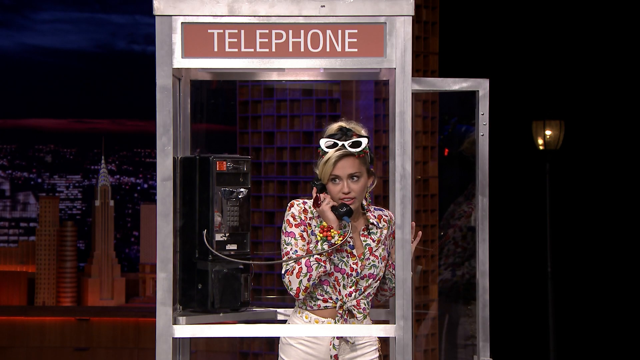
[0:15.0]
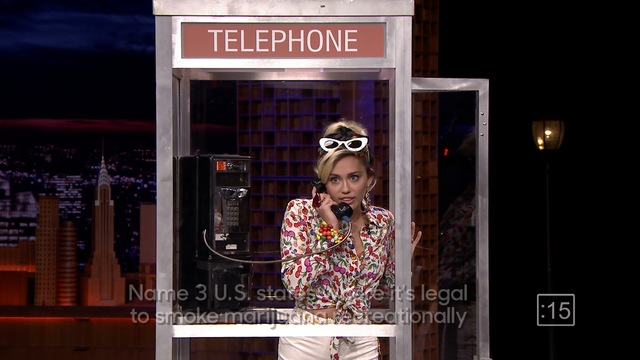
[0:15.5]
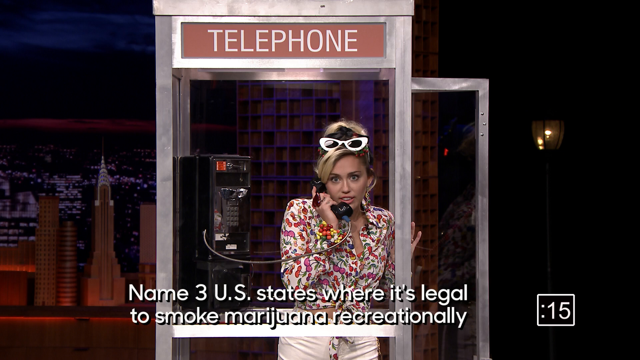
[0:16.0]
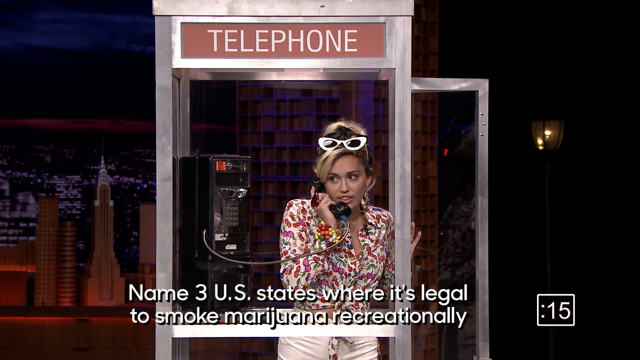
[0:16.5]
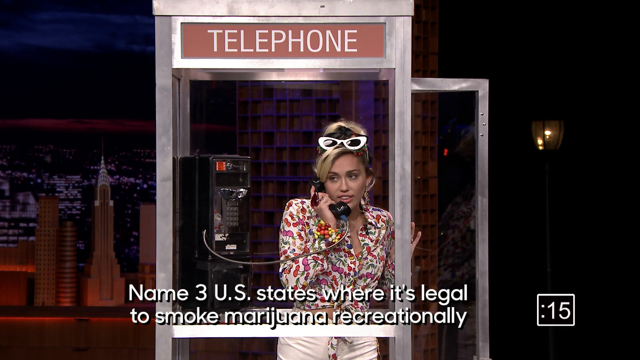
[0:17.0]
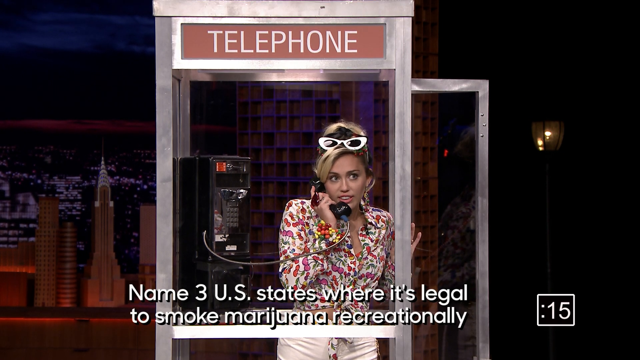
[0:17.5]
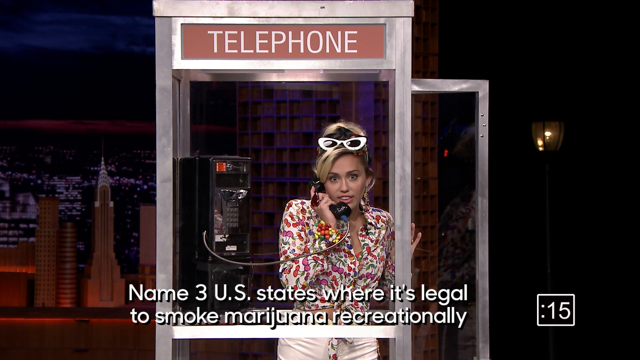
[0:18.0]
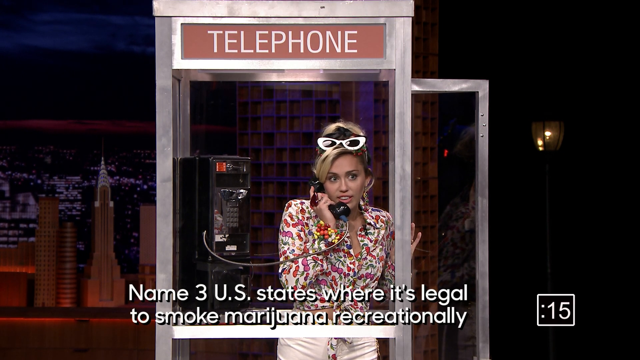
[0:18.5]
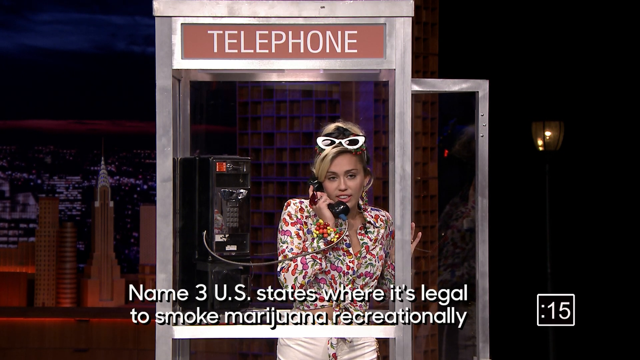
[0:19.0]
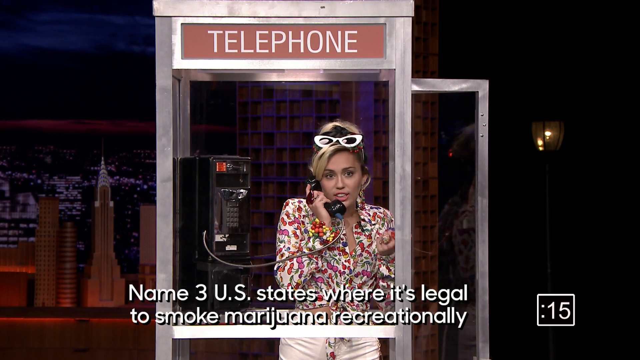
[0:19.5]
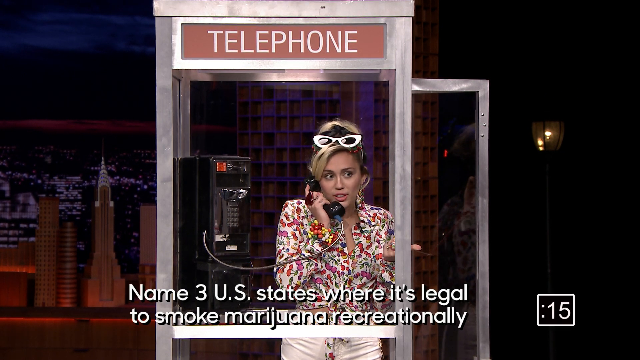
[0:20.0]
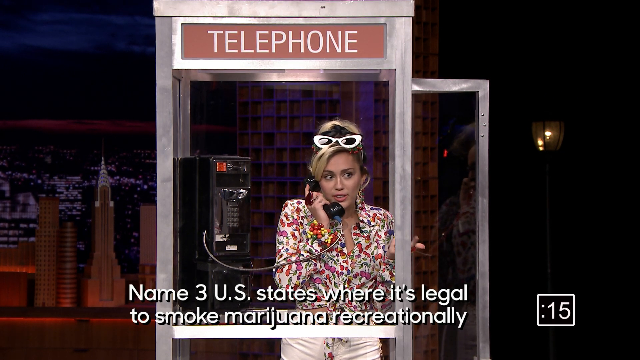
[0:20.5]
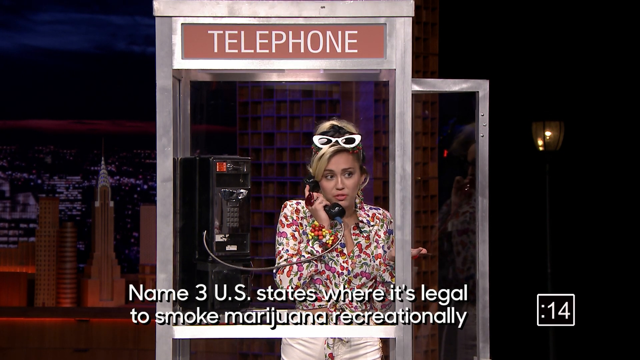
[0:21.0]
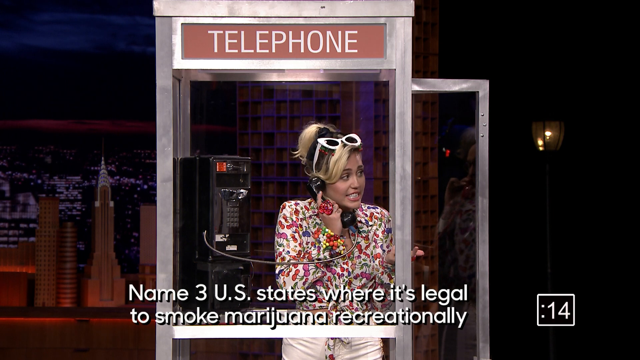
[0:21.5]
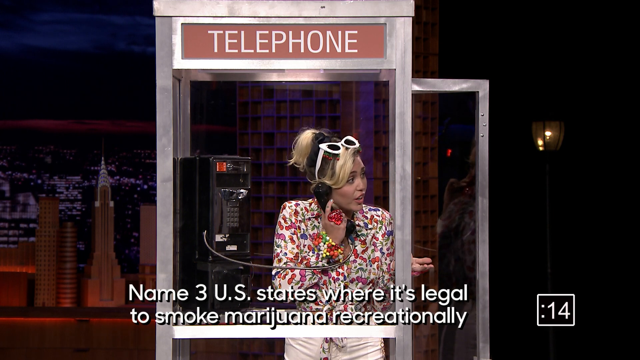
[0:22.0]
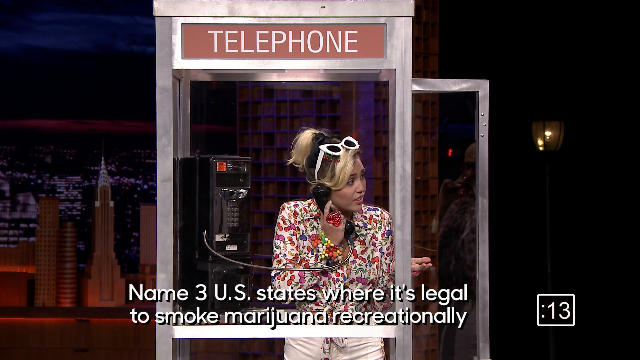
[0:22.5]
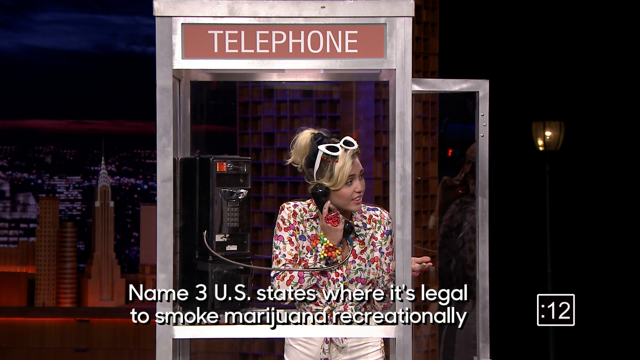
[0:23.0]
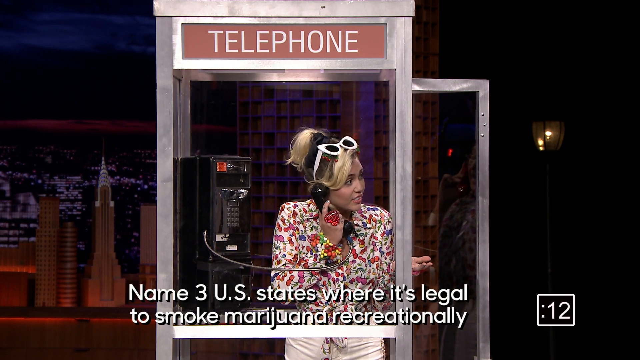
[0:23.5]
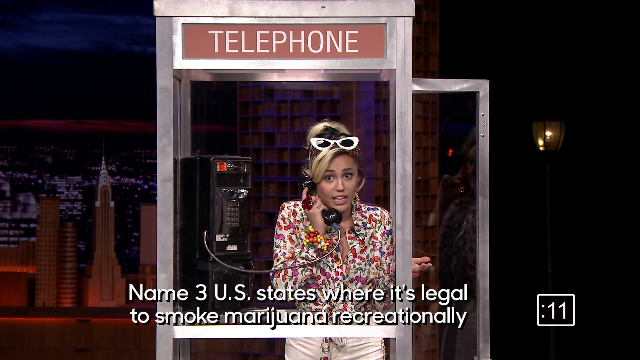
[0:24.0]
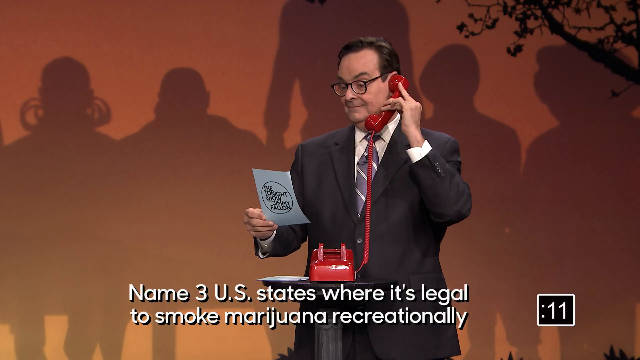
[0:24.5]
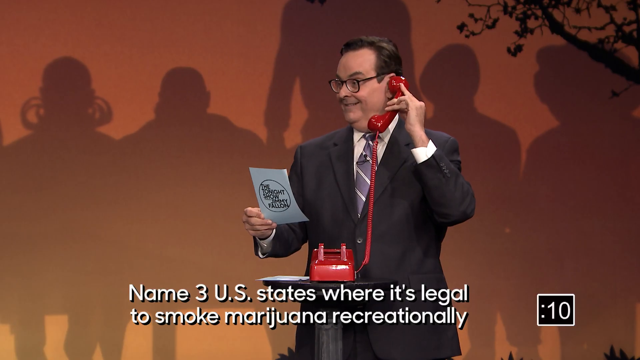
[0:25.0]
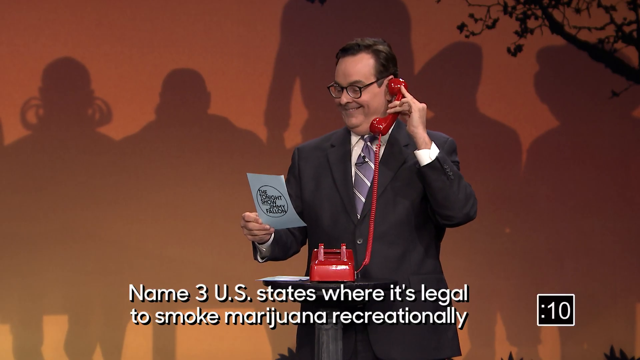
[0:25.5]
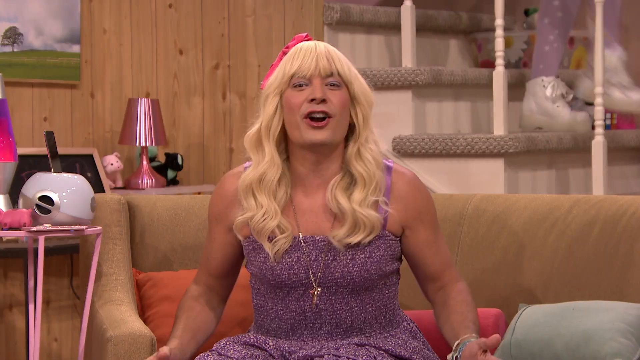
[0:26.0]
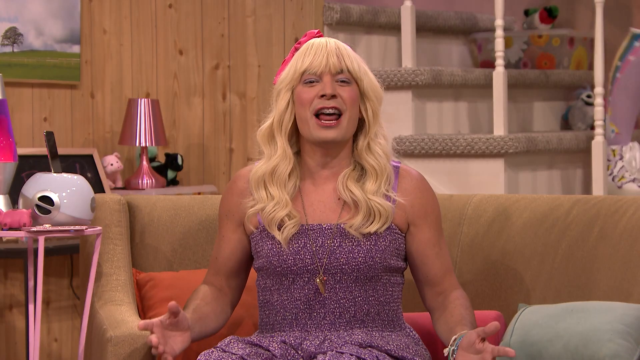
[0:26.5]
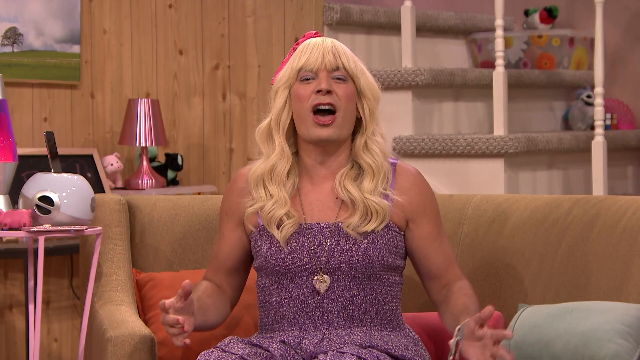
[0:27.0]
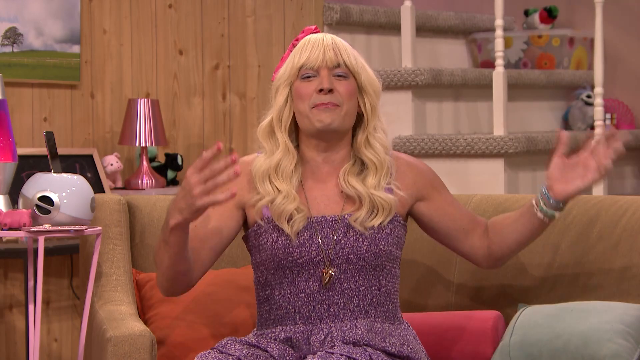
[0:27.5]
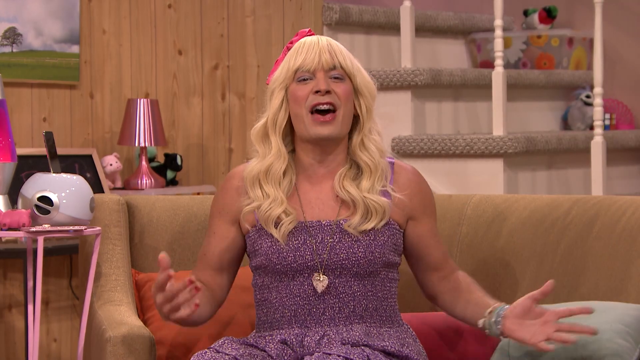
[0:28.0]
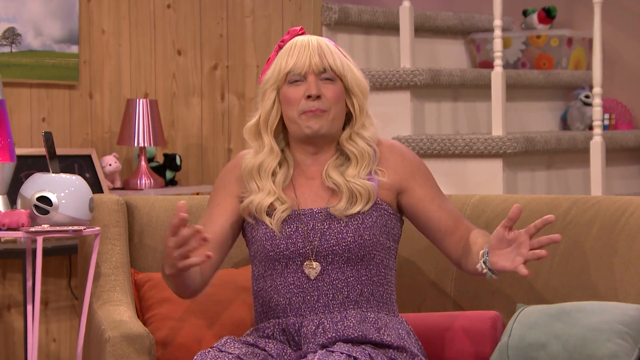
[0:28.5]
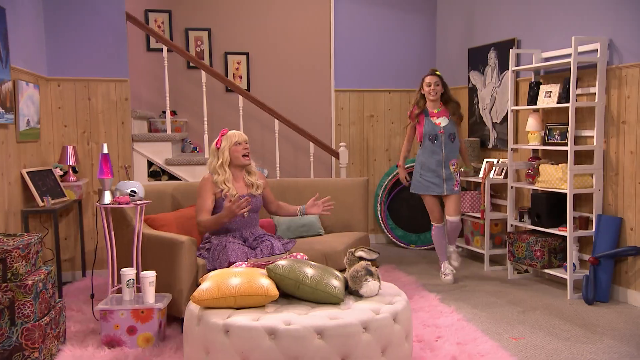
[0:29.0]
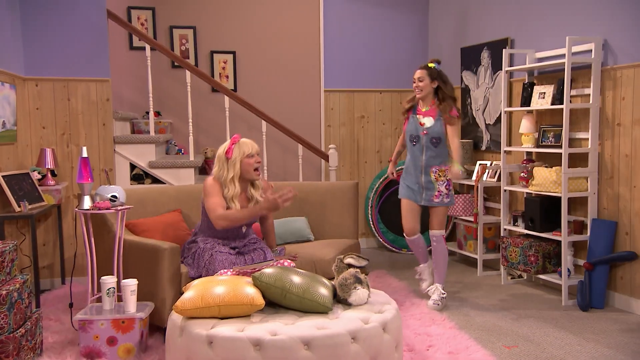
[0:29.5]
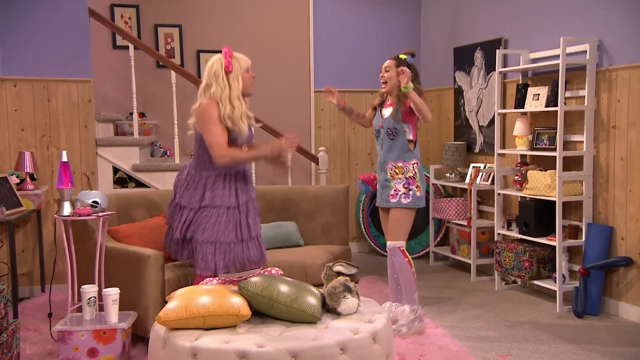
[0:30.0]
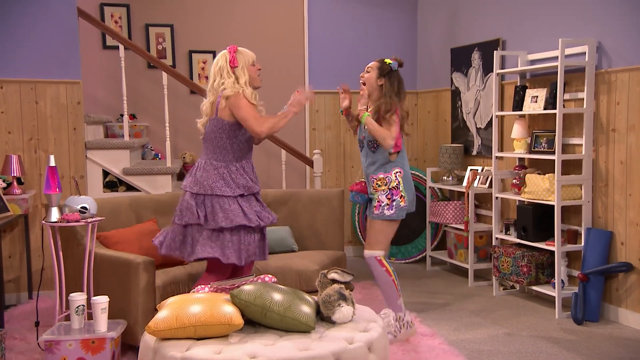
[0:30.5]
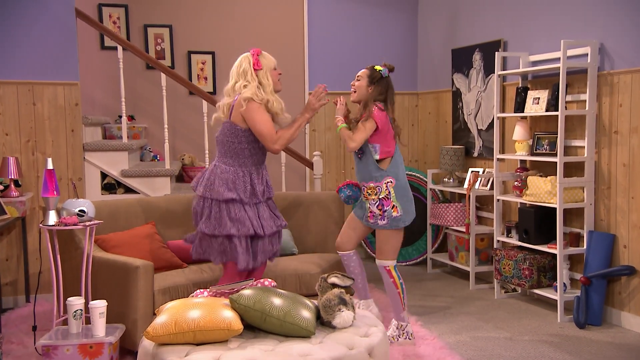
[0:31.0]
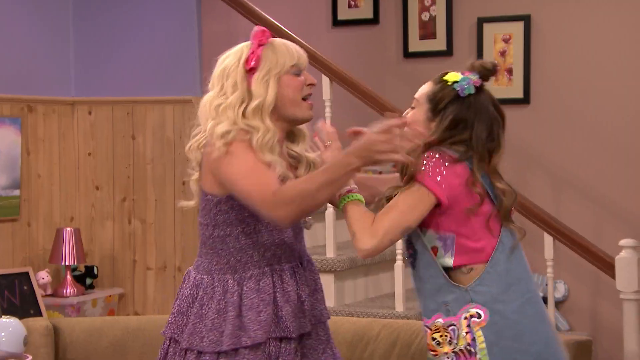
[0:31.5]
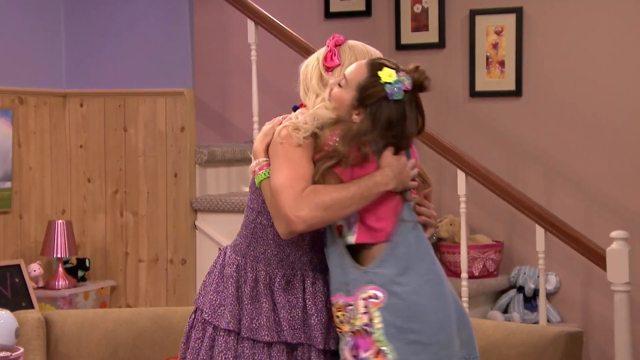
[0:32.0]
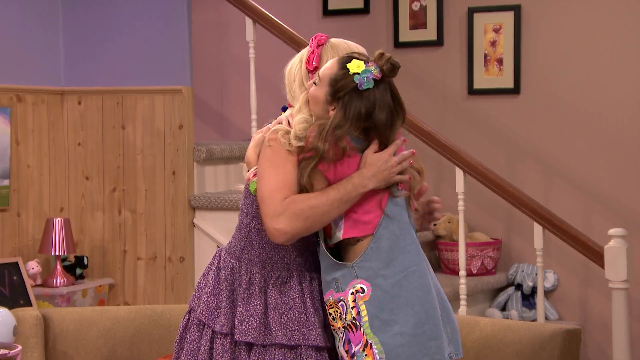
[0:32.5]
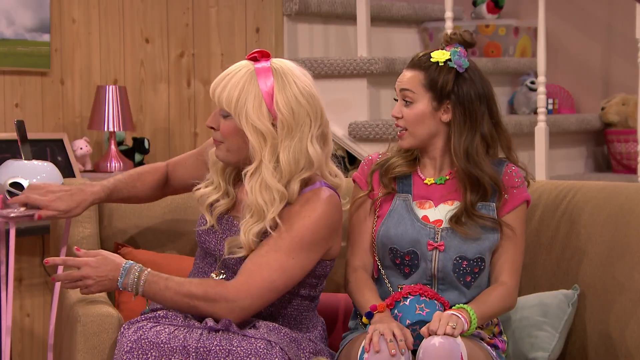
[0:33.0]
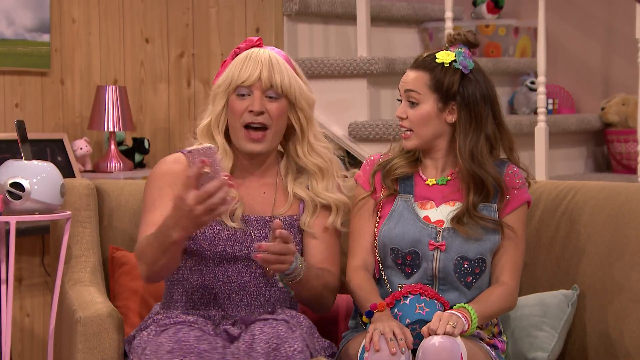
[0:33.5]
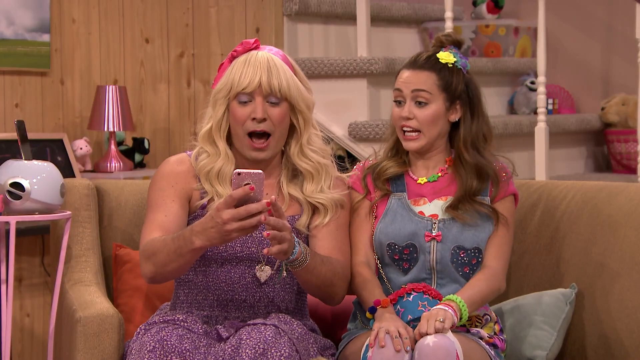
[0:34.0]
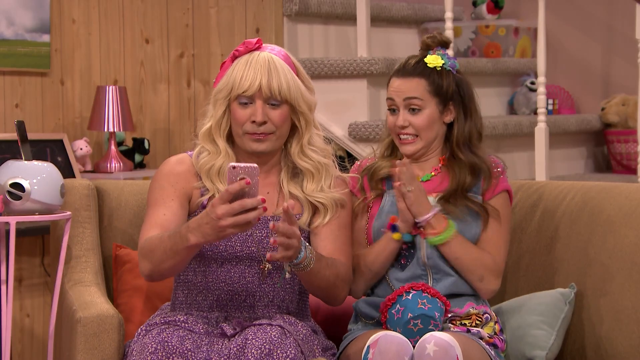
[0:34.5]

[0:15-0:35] Miley is inside a telephone booth, wearing kind of a 70s-style floral shirt, white pants, and big white sunglasses on top of her head. The booth is glass with gray metal trim, and its door faces right. She has the phone up as she looks to the camera. Text reads "Name three U.S. states where it's legal to smoke marijuana". She looks to her right to see if anybody has the answer, then talks on the telephone again. In the background there is darkness, with a city landscape on the right, and a small counter counts down 15 seconds. The video cuts to a man in a gray suit with dark hair on a red phone, facing forward to the left and talking, then to Jimmy Fallon in a purple dress with long blonde hair and a pink ribbon. He and Miley come down the stairs and sit together on a brown couch. In the background are items such as a lamp and some toys, and a staircase coming down. The room has a very old-school, retro look: the wall is wood panel halfway up and light blue the rest of the way. In the bottom right corner is the Tonight Show logo, a blue circle that says "Late night with Jimmy Fallon" in kind of a grayish color.